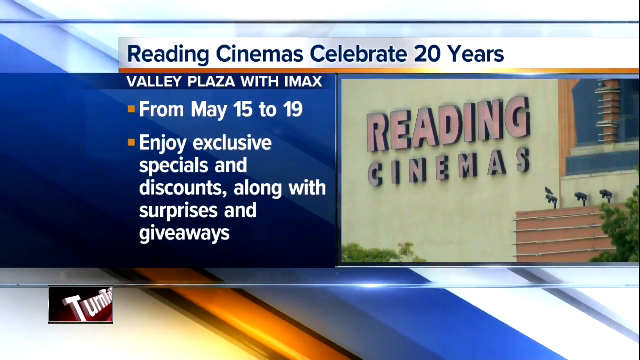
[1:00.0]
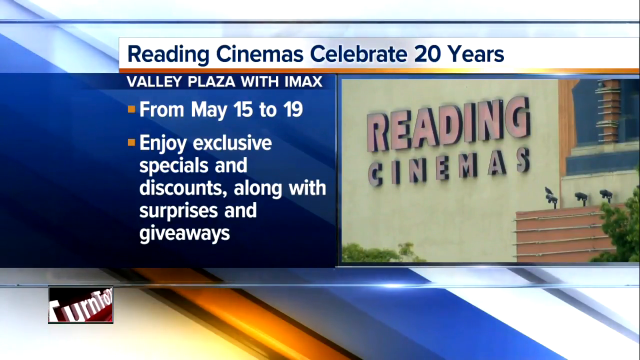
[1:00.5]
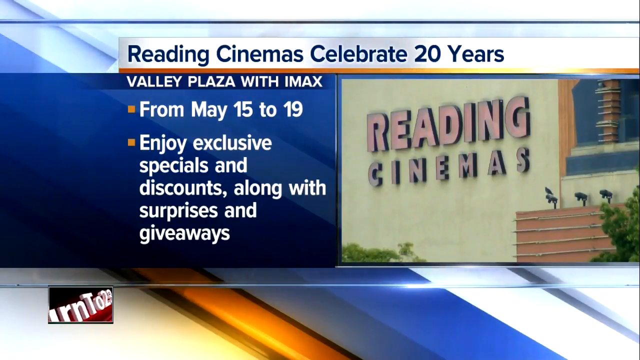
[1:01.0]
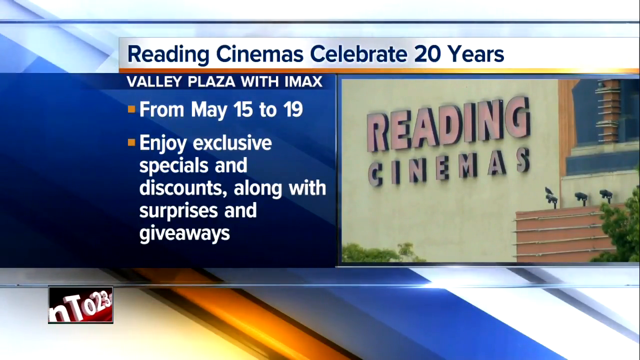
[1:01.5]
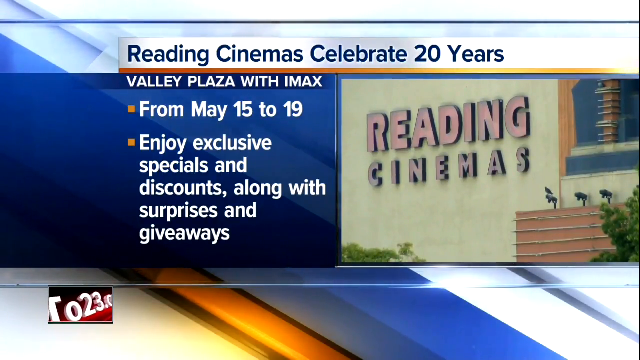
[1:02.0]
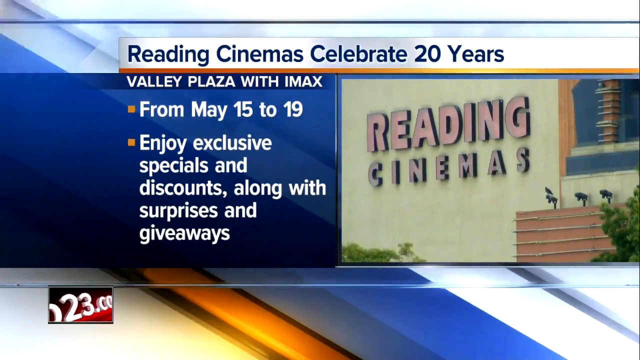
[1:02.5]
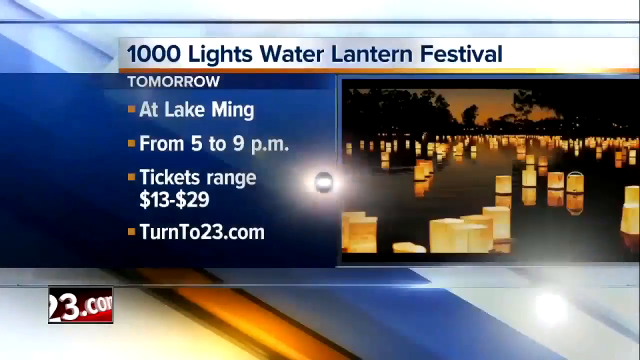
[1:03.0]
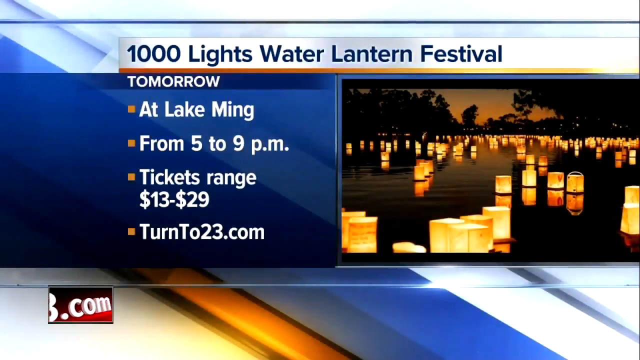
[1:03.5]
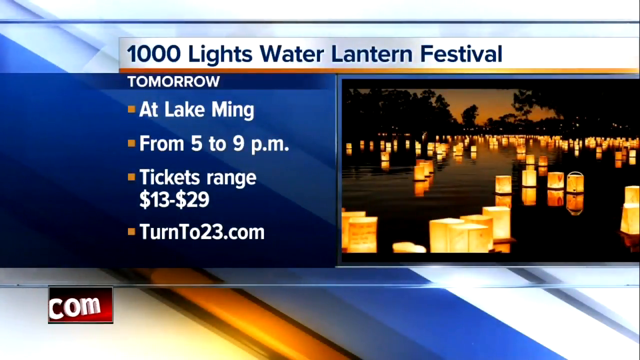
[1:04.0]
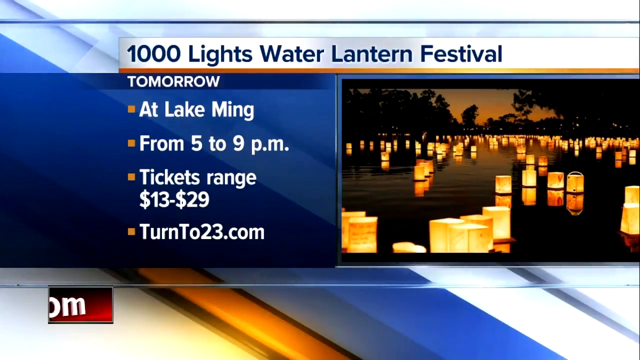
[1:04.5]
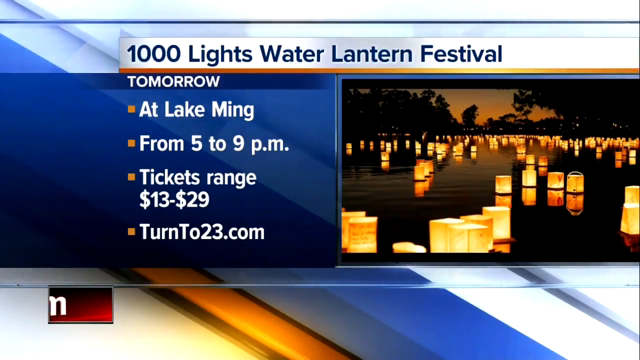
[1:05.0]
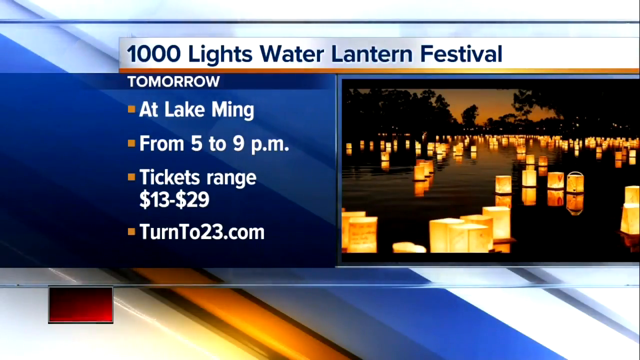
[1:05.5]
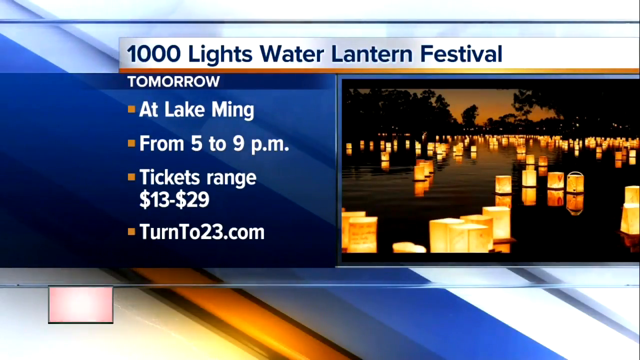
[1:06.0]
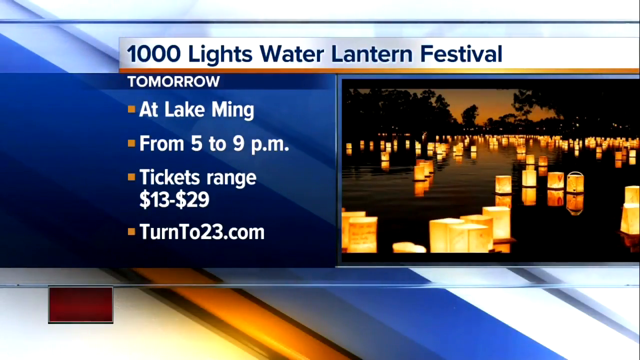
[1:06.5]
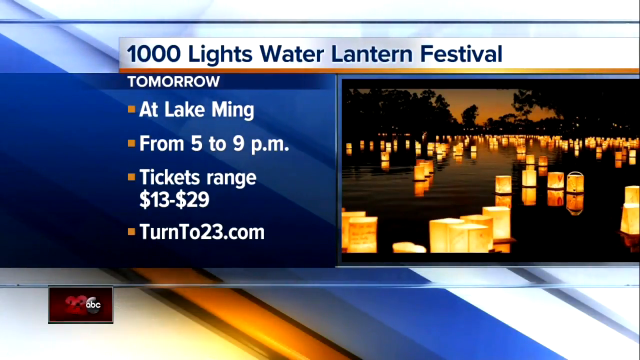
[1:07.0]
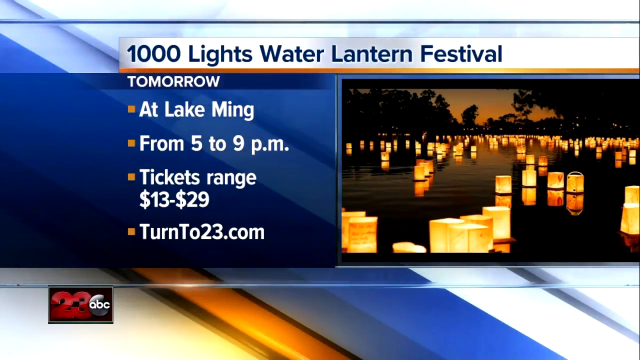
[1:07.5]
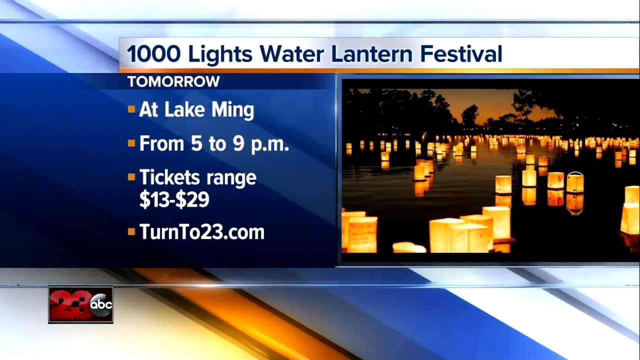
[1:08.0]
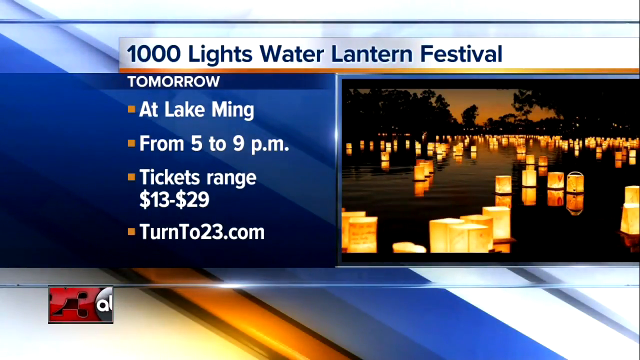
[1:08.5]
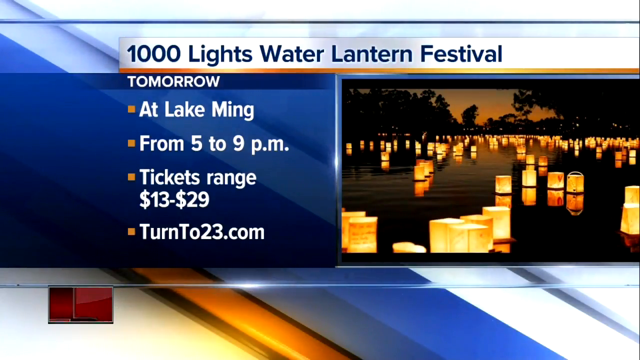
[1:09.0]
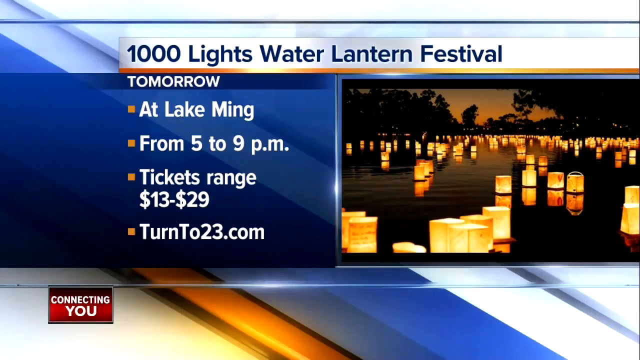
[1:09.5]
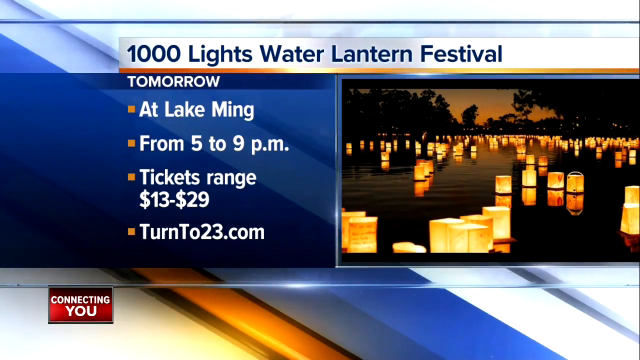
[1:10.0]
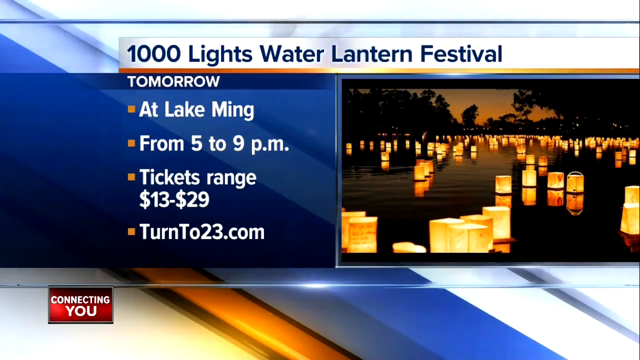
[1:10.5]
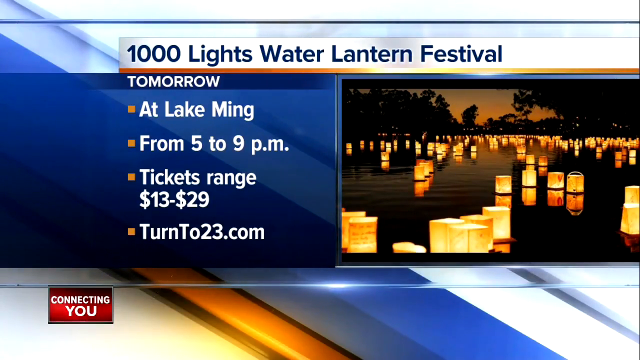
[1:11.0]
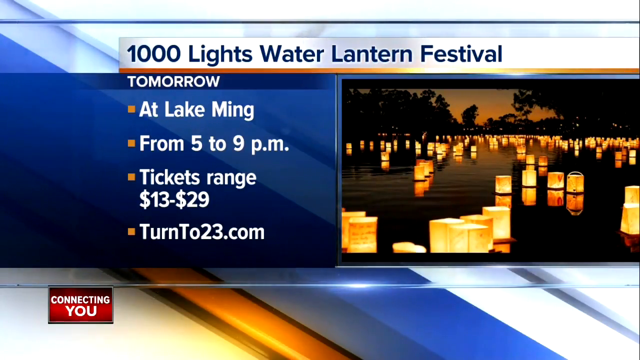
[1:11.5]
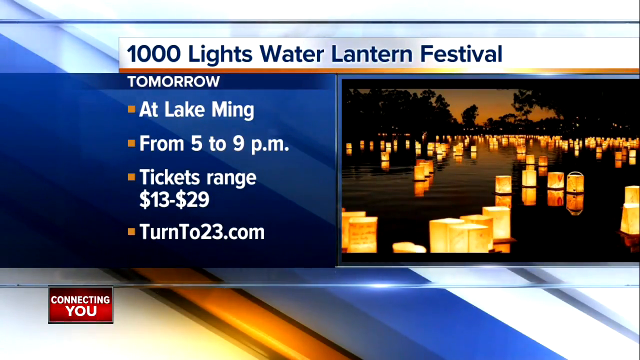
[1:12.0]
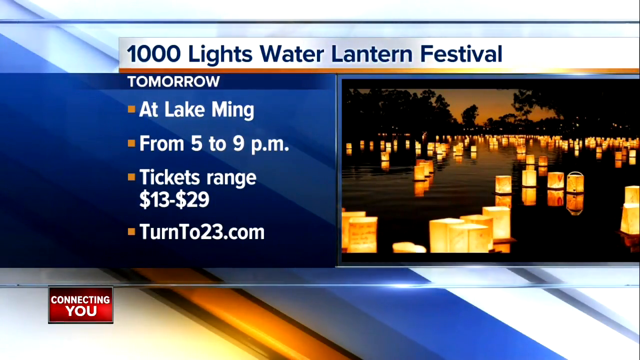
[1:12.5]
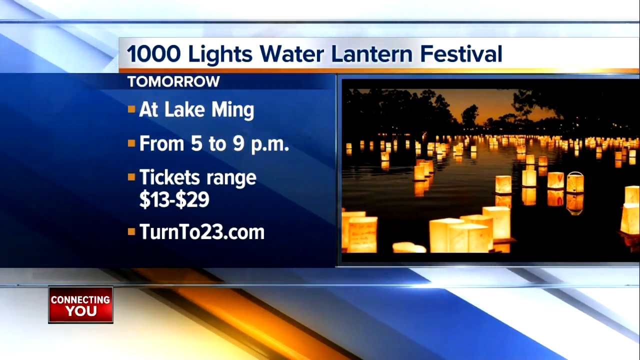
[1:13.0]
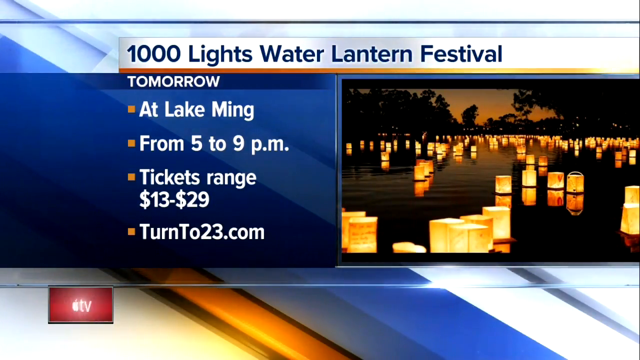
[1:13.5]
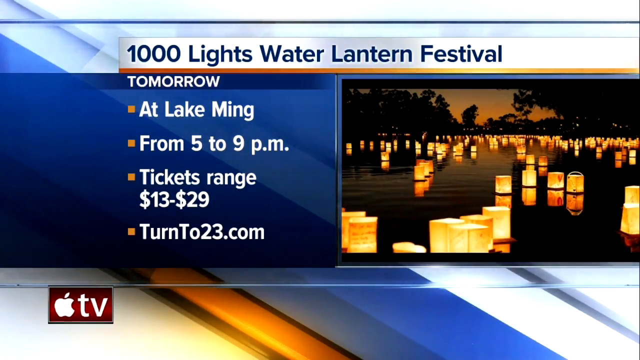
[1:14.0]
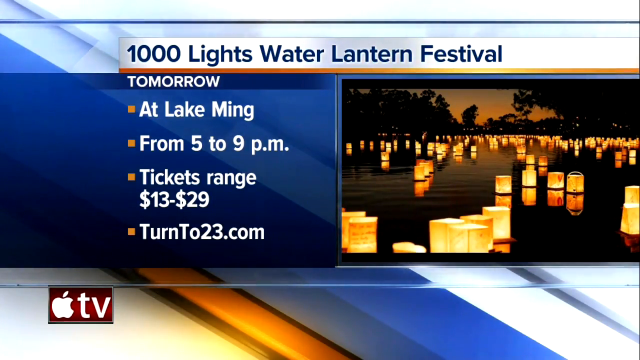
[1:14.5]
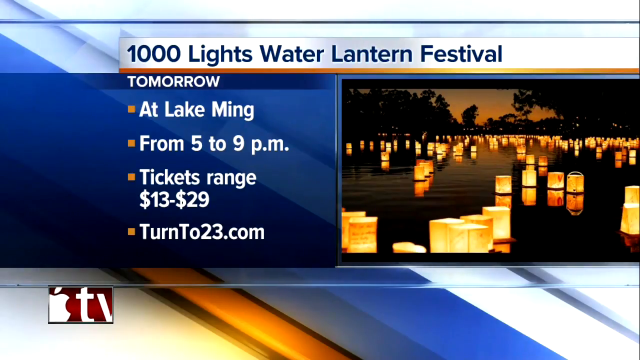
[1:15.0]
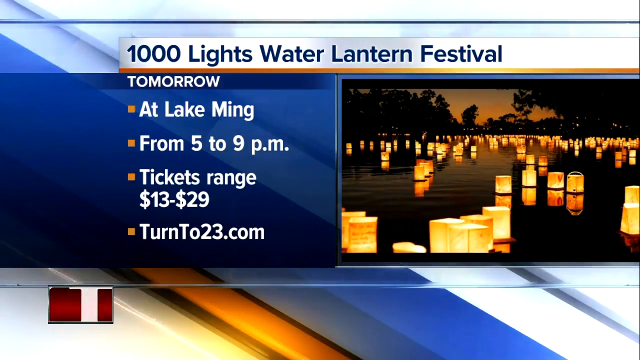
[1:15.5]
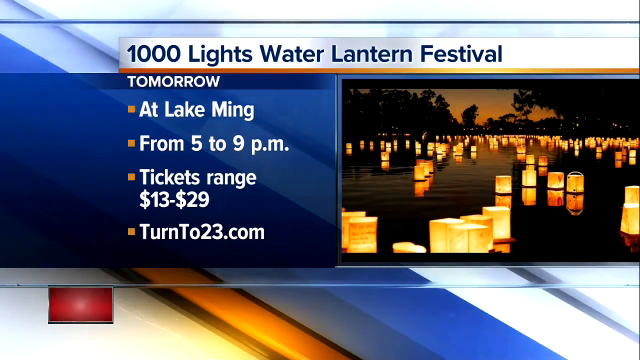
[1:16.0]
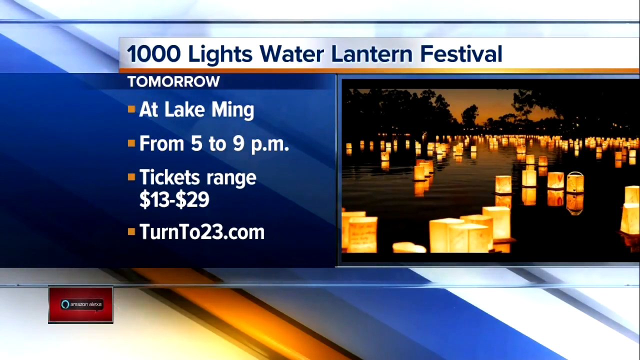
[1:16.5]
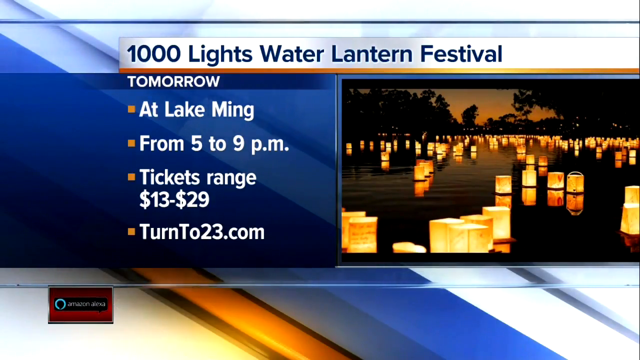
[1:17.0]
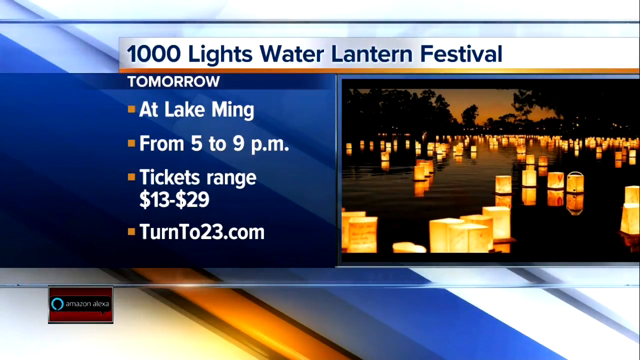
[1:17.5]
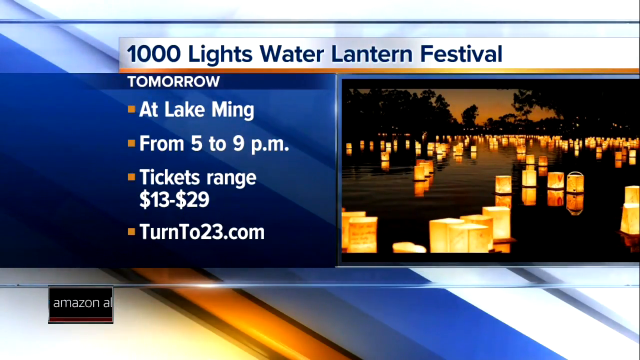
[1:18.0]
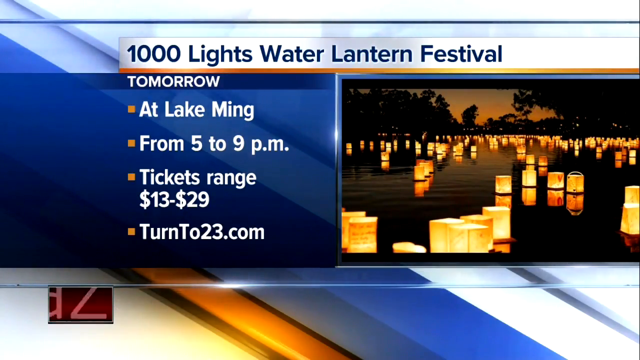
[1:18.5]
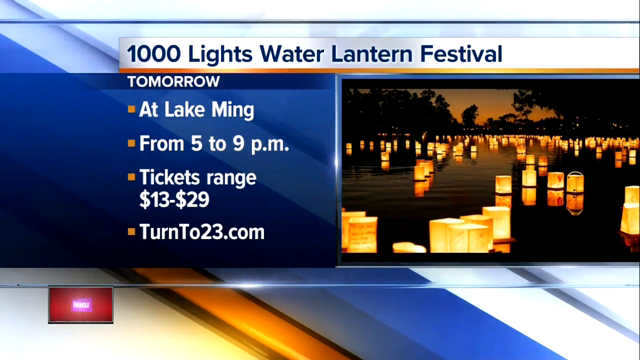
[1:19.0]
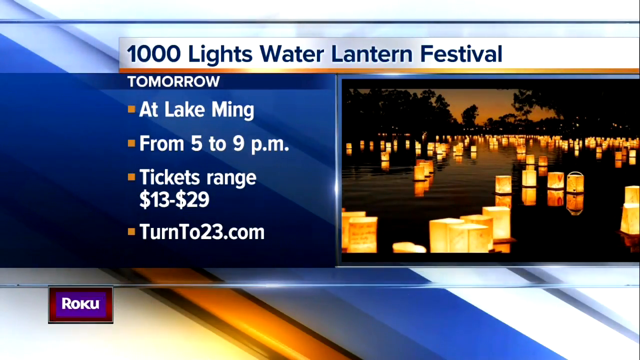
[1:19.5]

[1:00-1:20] The captions read "reading cinema, celebrate 20 years," "Valley Plaza with IMAX from May 15th to the 19th," and "enjoy exclusive specials and discounts along with surprises and giveaways." The newscast then turns to the 1000 Lights Water Lantern Festival, showing paper lanterns lit with candles floating on water. Text says "tomorrow at Lake Ming from five to 9 PM," with tickets ranging from $13 to $29, and "turn to 23.com."